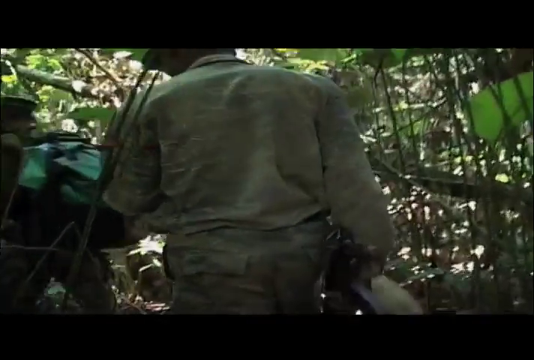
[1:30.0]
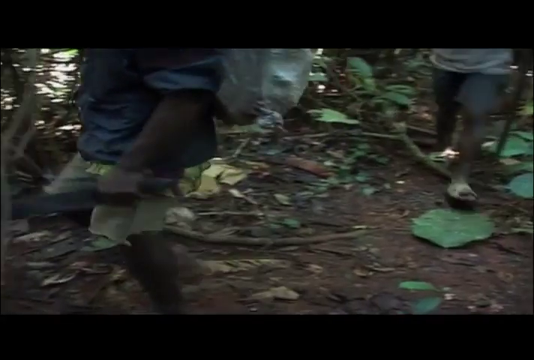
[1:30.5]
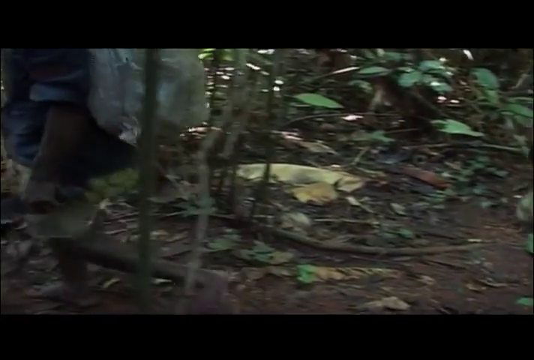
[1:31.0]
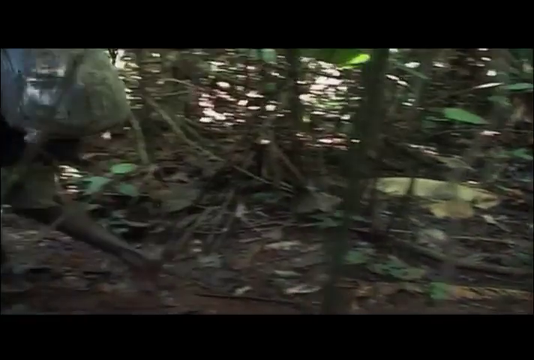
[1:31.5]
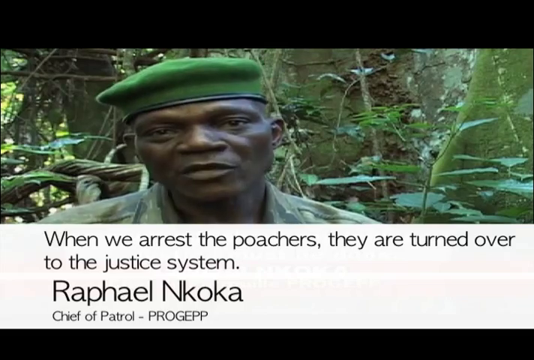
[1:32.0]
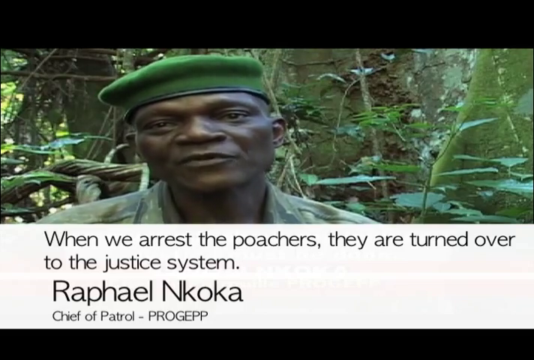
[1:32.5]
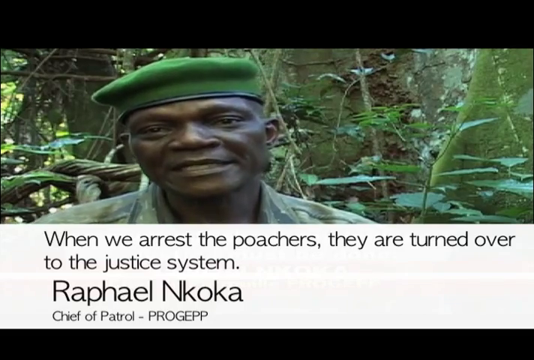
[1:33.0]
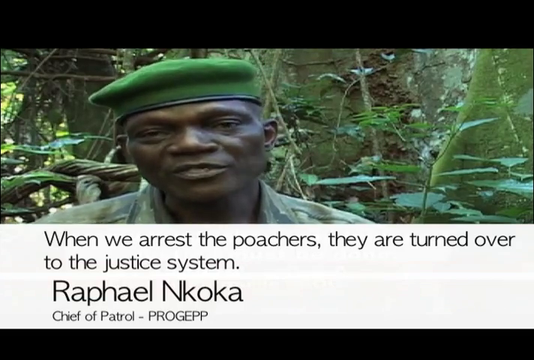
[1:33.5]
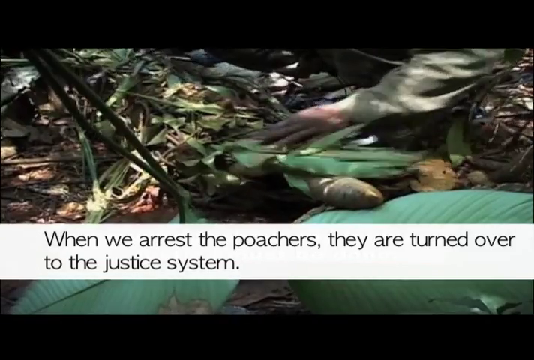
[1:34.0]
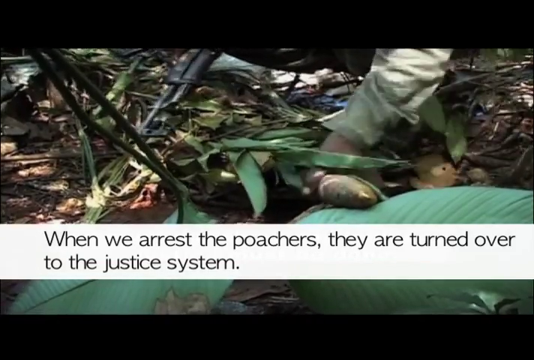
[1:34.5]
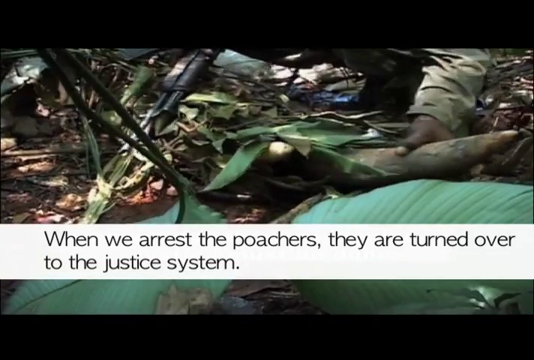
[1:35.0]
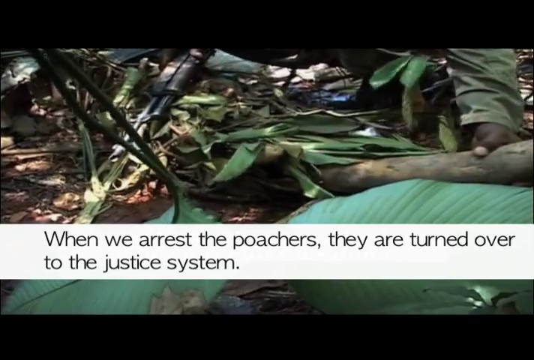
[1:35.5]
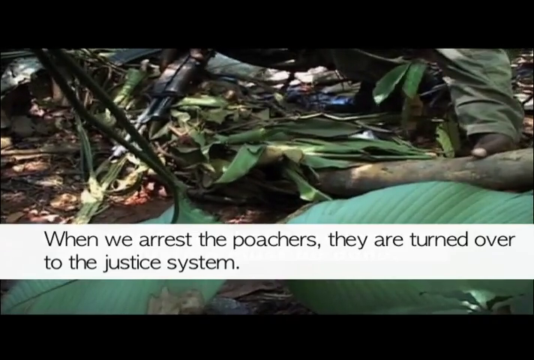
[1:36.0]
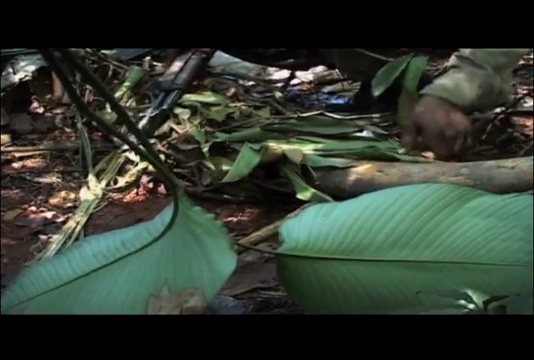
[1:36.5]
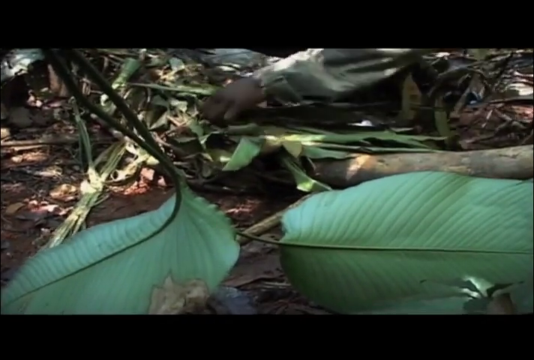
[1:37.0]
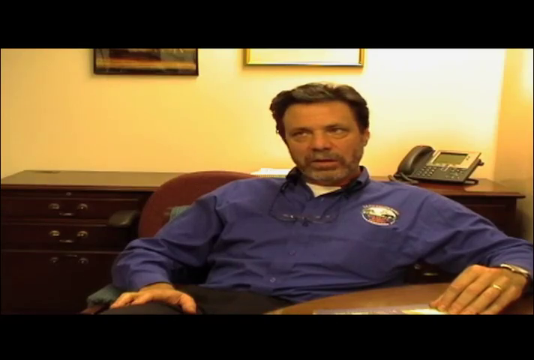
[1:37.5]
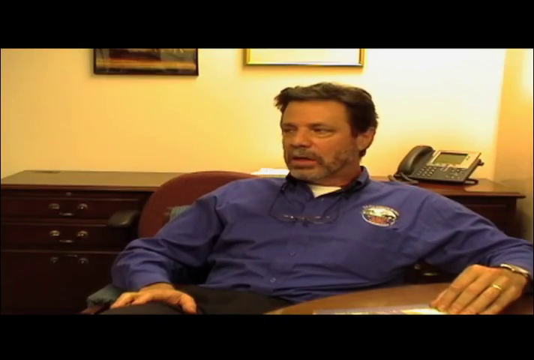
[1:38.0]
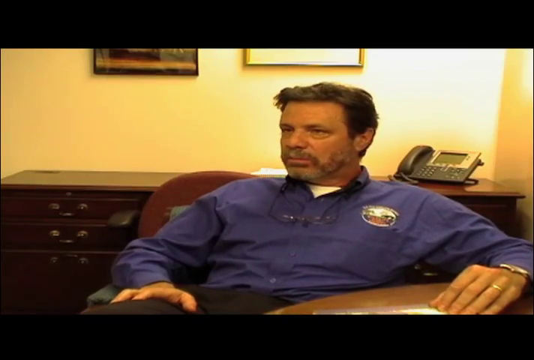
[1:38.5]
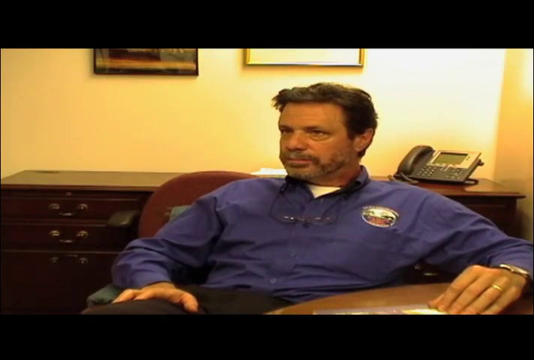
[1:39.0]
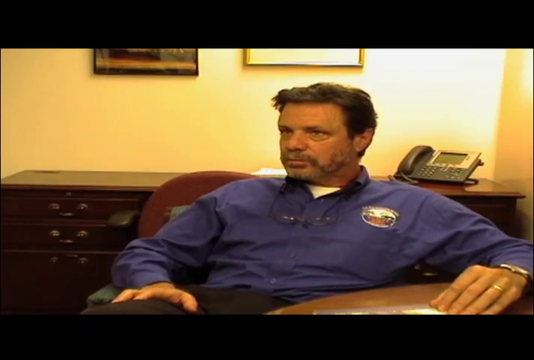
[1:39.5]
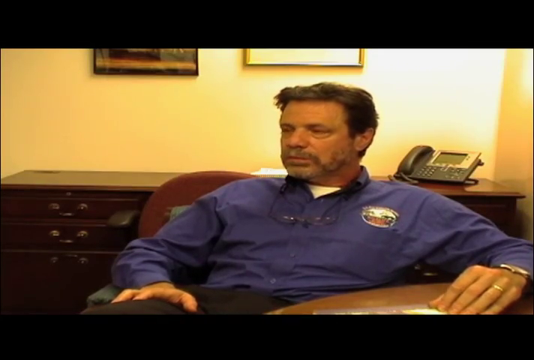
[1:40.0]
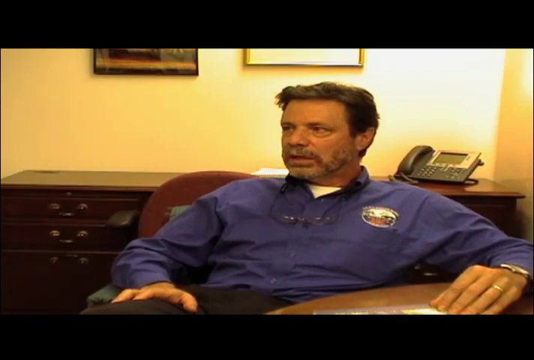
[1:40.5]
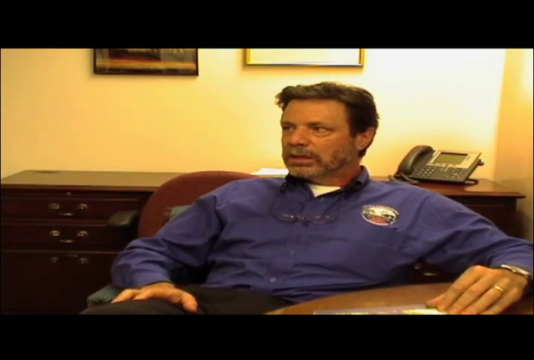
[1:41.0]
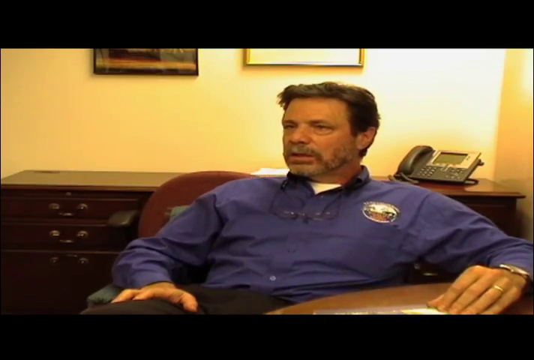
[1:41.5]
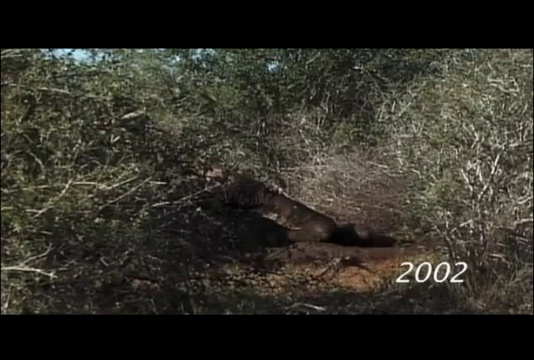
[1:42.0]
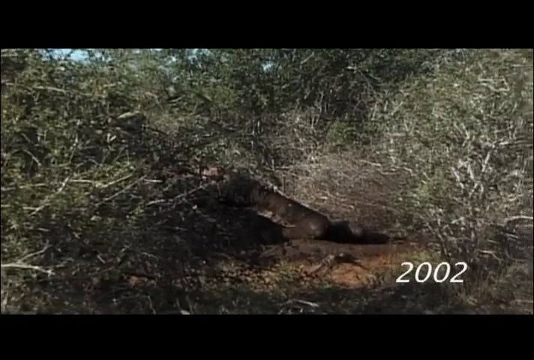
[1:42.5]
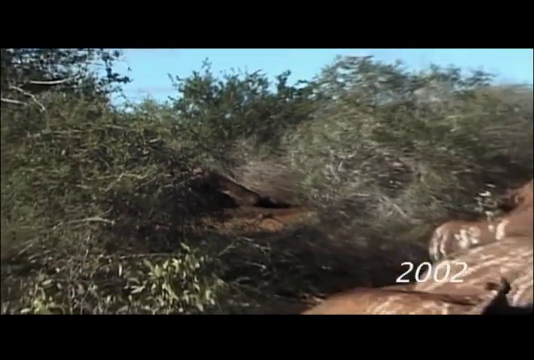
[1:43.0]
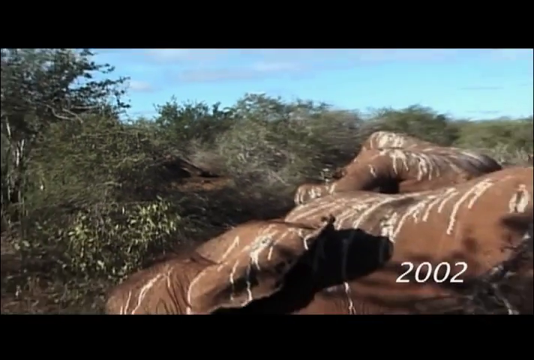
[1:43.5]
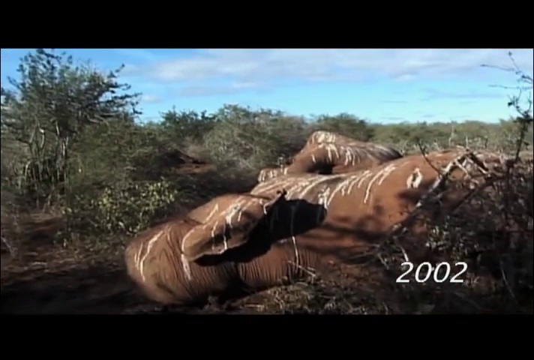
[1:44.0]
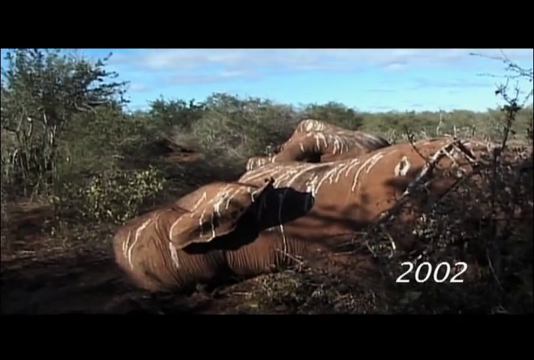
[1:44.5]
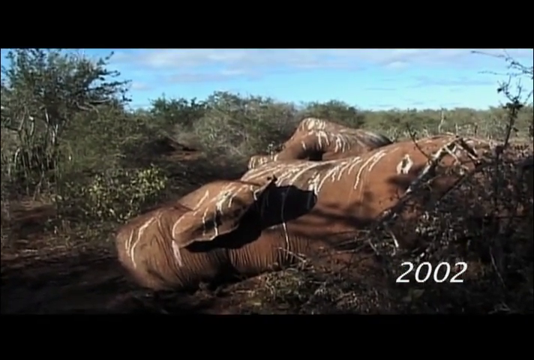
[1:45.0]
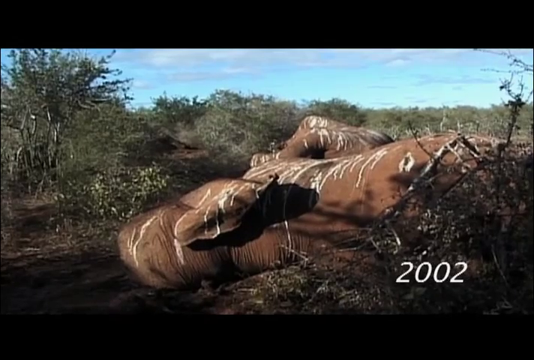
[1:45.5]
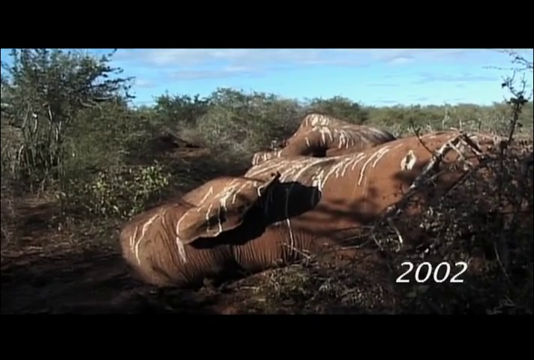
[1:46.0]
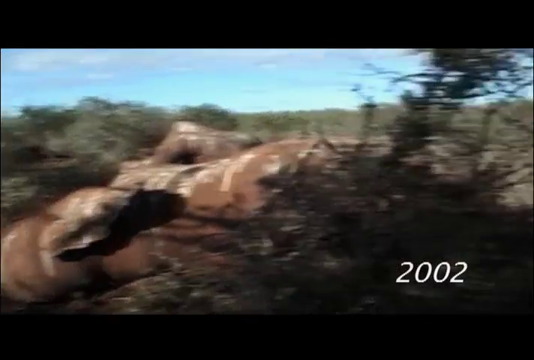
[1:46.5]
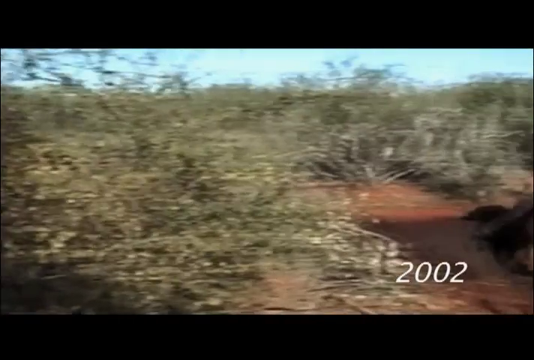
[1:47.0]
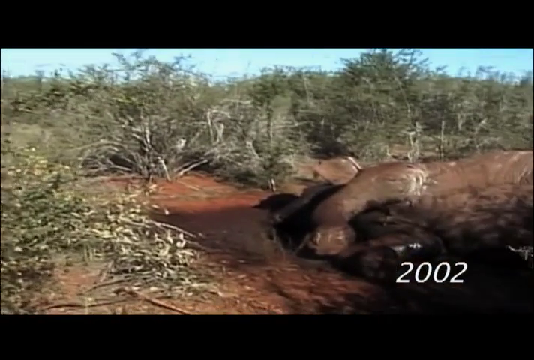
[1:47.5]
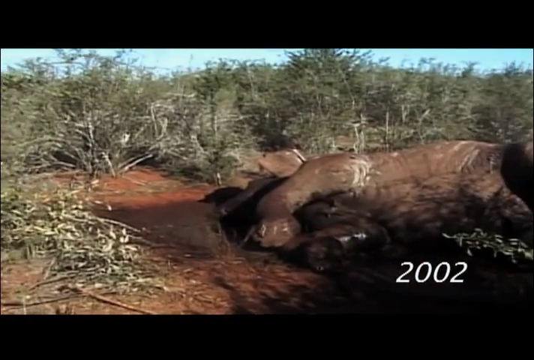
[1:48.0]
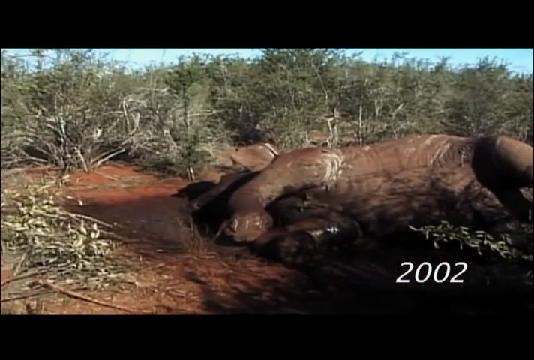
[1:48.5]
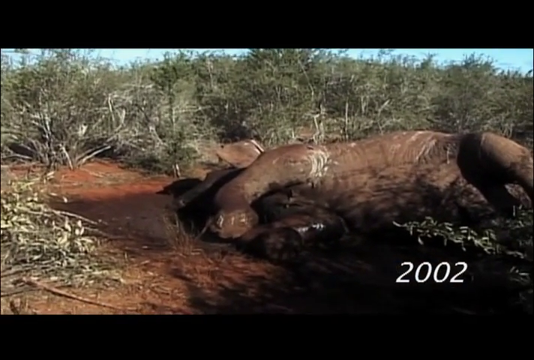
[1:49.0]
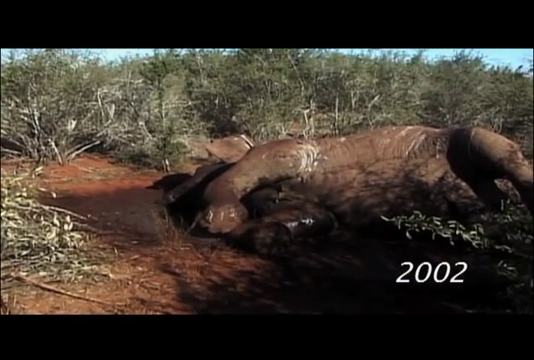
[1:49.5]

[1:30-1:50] The men continue walking through the forest; the guide wears shorts, while the man with the rifle wears long pants. The video cuts to a man in what appears to be an army or law enforcement uniform in Africa. As he begins to speak, the bar across the bottom shows "Raphael, N-K-O-K-A" and a patrol title, and the text reads "when we arrest the poachers, they are turned over to the justice system." A man's hand on the ground appears to pull a tusk or a limb out from under leaves and grass. The video returns to the man in the office speaking from his chair. Footage from somewhere on the savannah follows with "2002" overlaid on it, appearing to show dead elephants lying on the ground. The camera pans to the right, revealing more dead elephants on the ground.